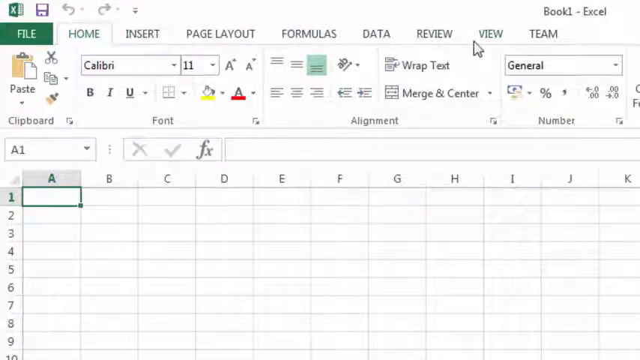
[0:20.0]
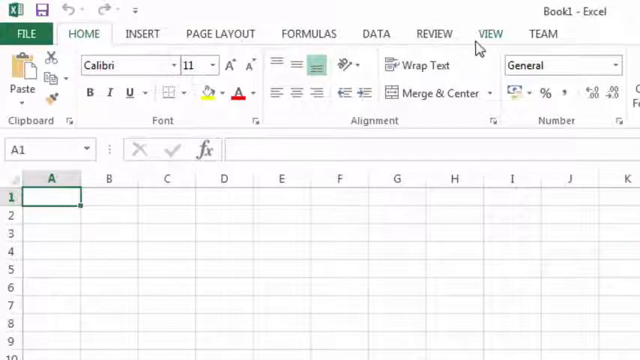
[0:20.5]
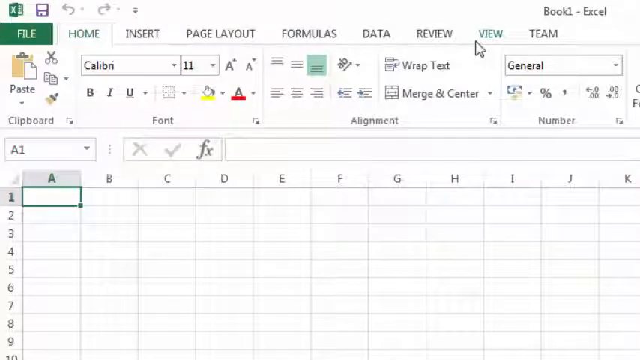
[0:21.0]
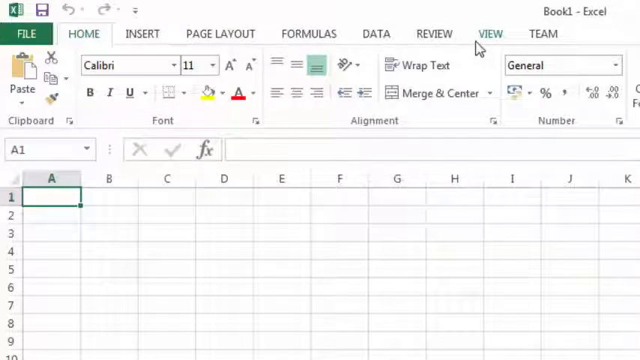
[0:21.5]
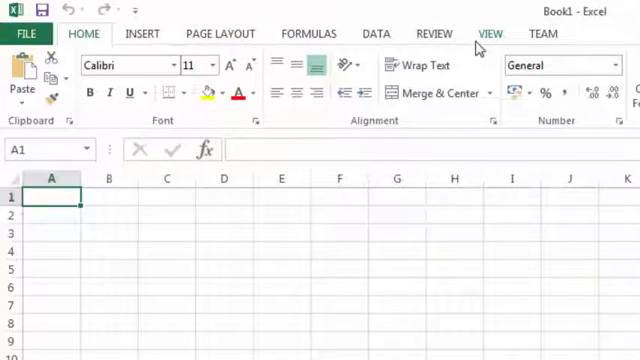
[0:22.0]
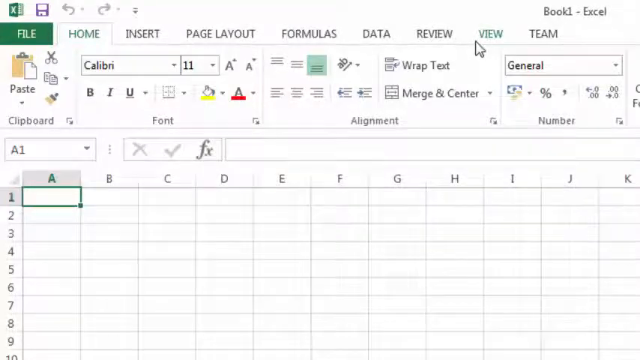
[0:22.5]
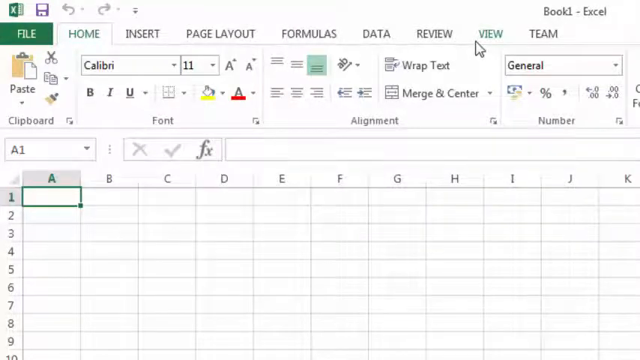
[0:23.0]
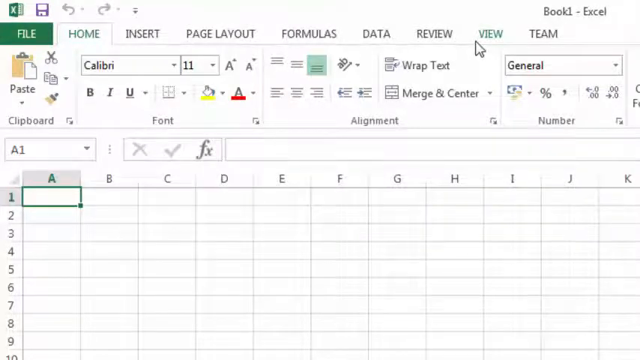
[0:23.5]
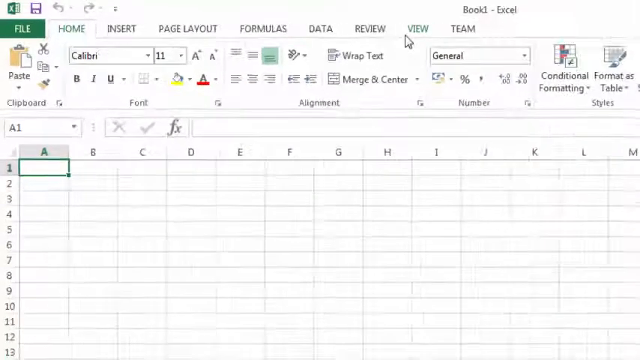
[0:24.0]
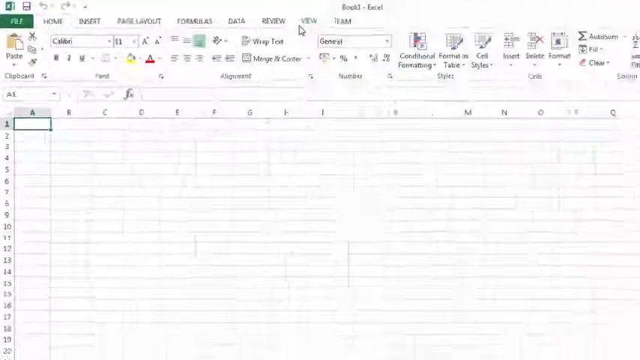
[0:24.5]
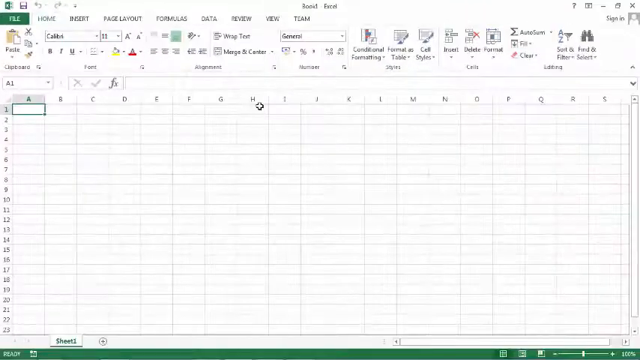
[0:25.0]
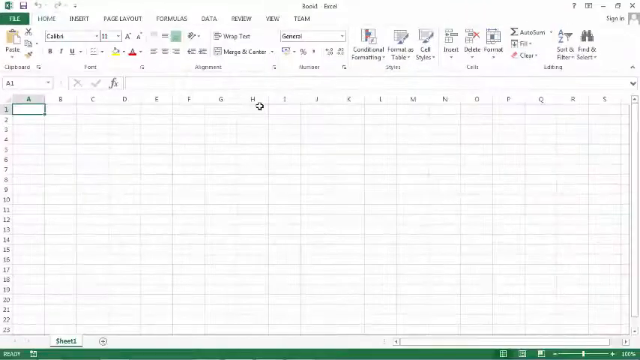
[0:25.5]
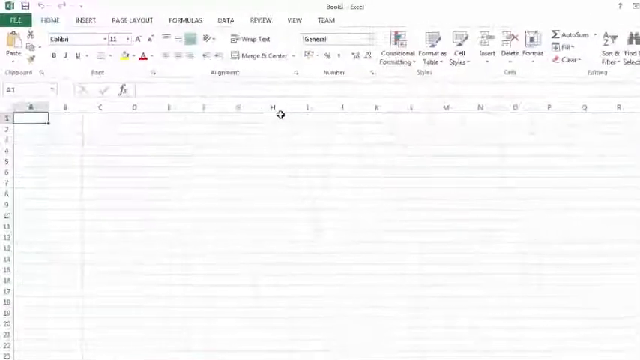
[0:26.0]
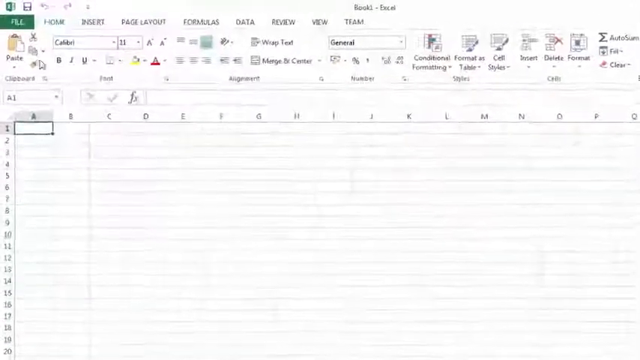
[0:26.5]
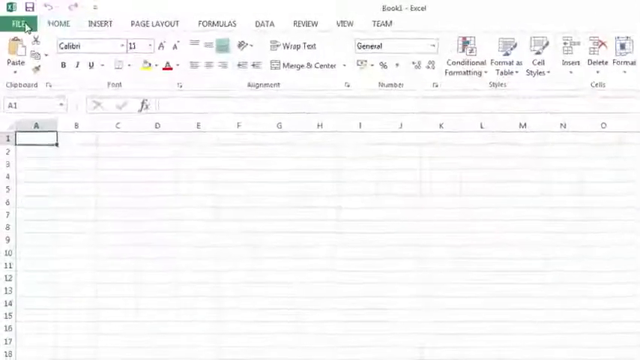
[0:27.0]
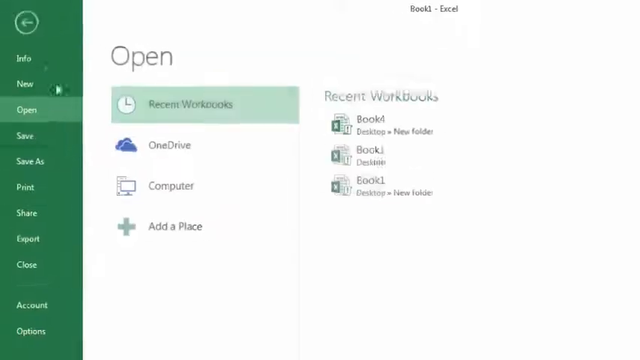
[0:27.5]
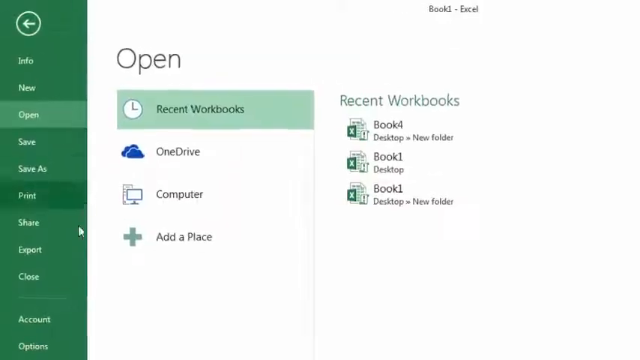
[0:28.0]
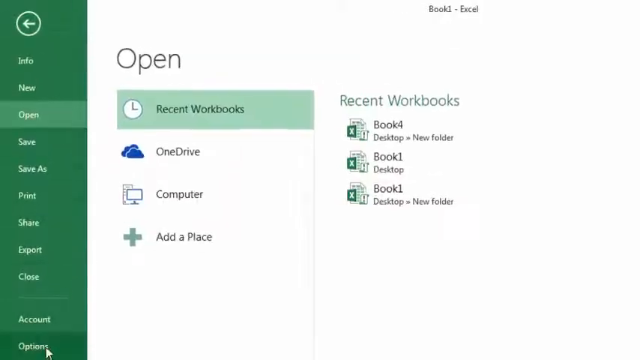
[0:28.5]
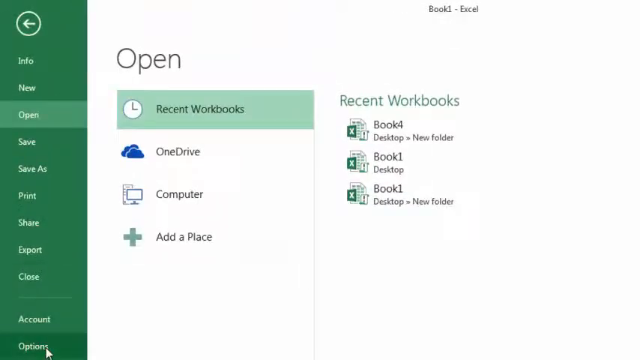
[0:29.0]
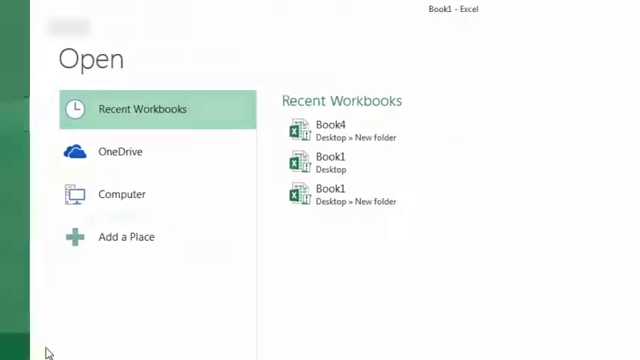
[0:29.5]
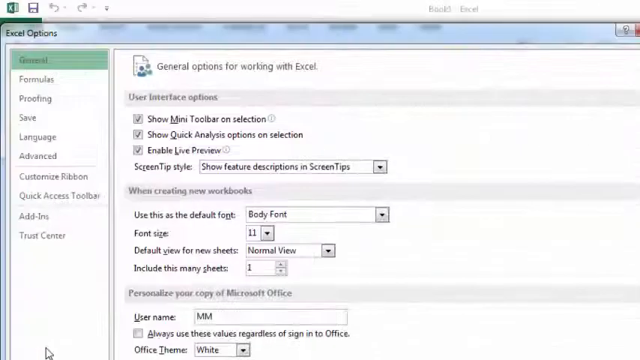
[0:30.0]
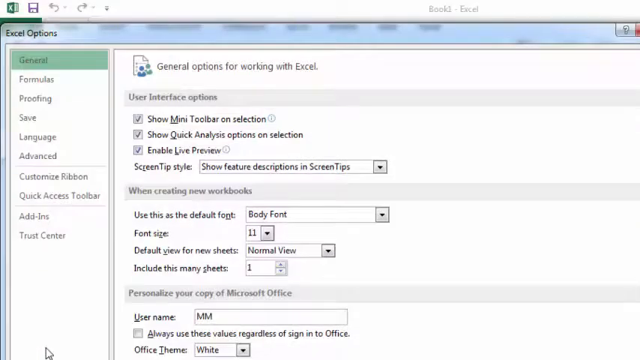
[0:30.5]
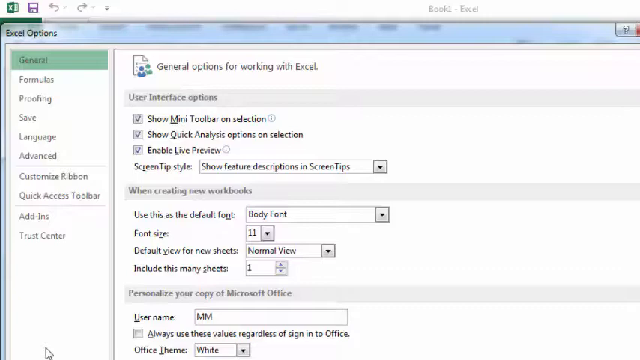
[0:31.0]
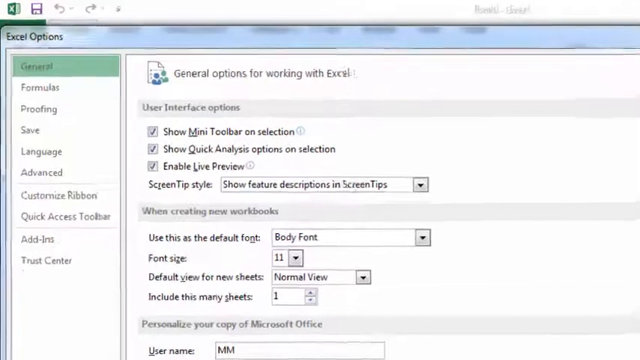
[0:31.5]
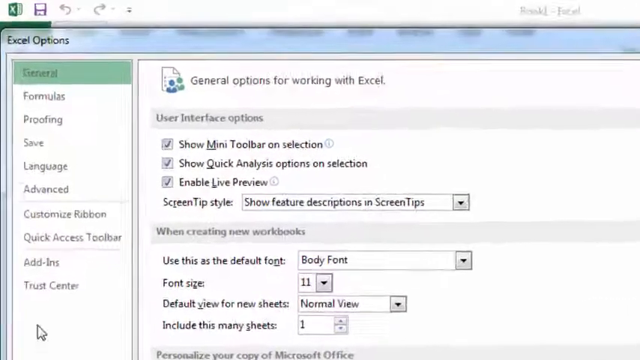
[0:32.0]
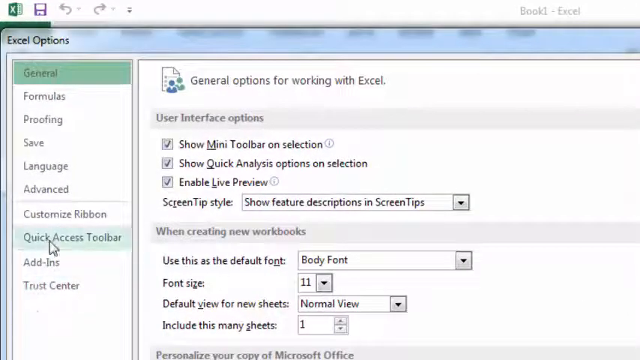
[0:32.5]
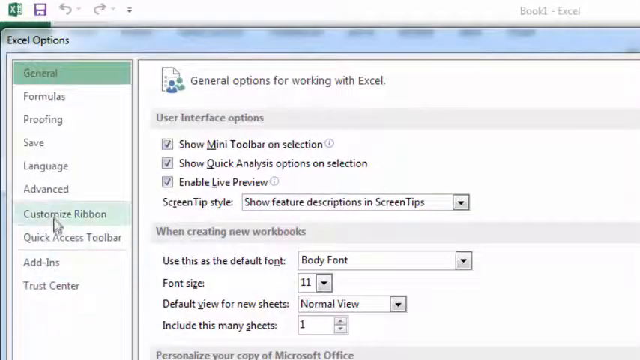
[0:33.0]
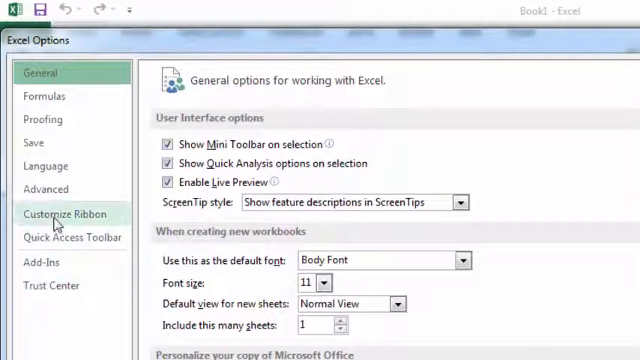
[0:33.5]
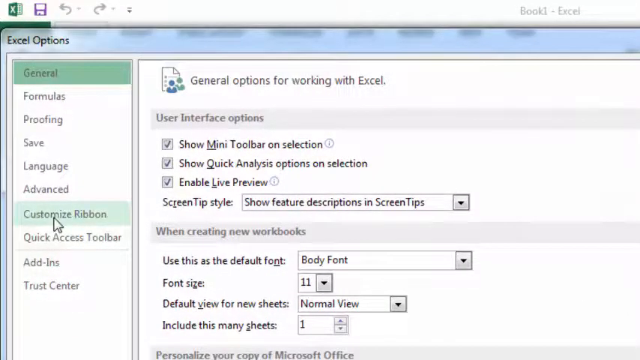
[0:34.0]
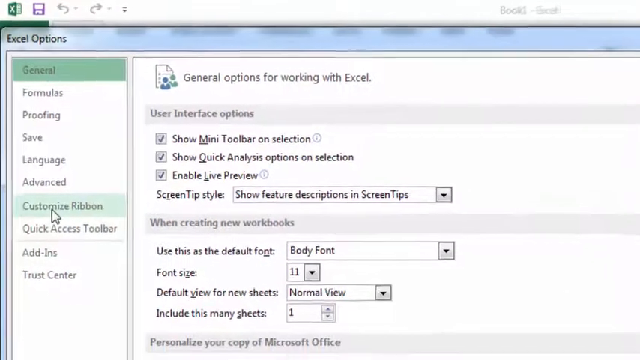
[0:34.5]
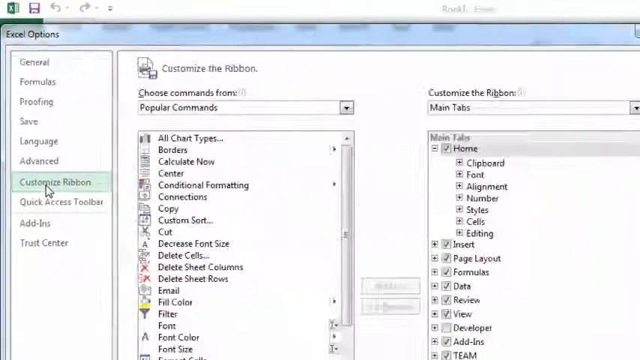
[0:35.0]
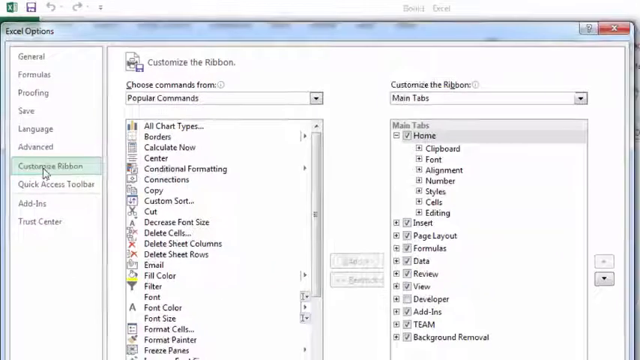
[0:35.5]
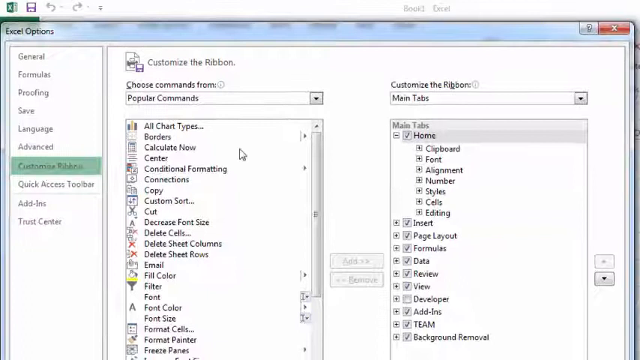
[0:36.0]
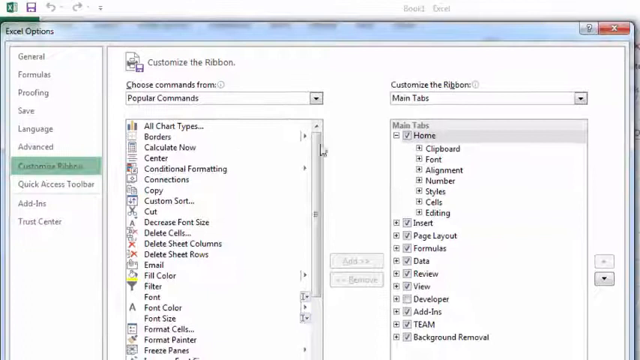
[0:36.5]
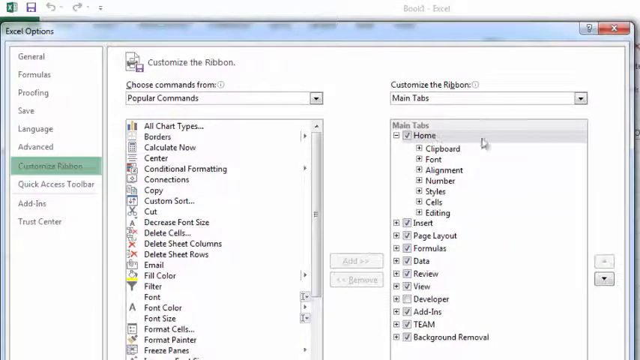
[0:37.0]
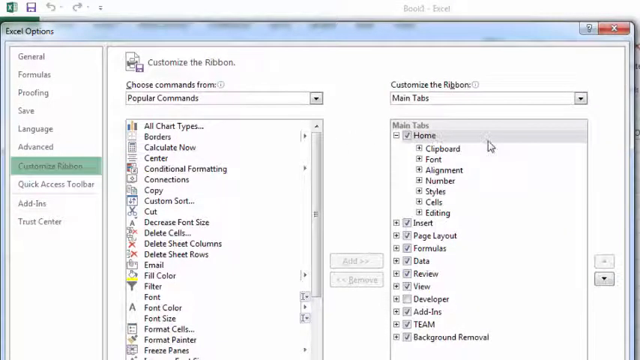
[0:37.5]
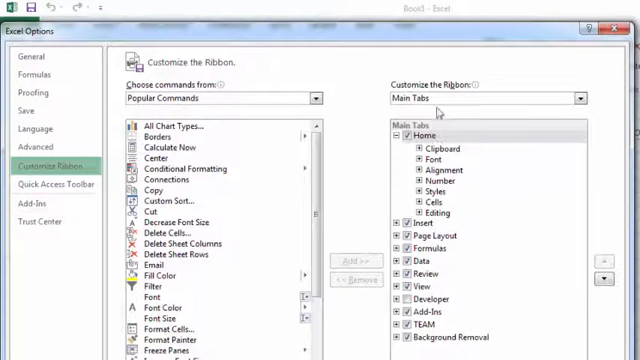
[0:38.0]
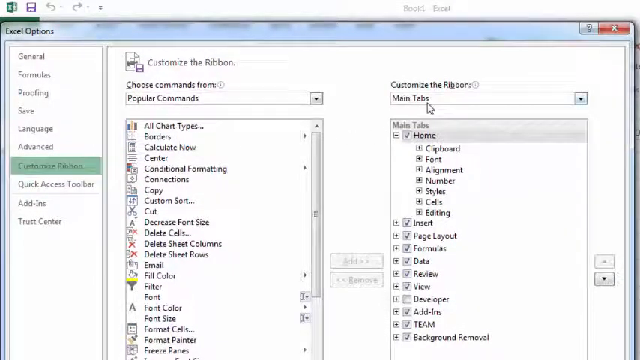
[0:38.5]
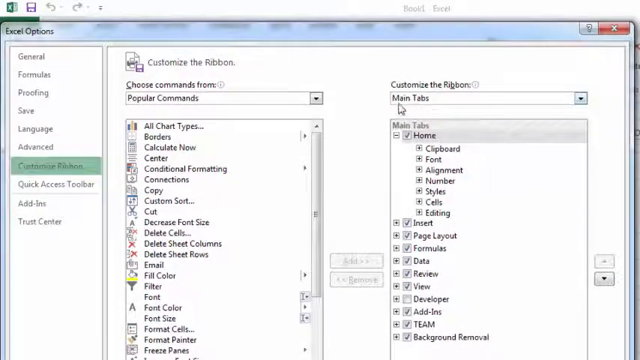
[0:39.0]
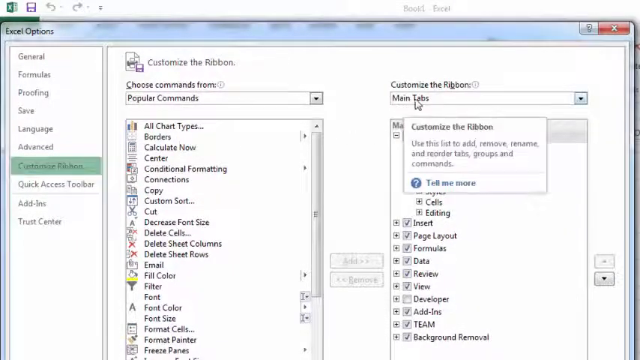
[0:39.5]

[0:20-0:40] Column A is seen and then unseen. The page is taken to the front view, where recent workbooks can be opened, and from there it goes to Excel Options. Excel Options lists General, Formulas, Proofing, Save, Language, Advanced, Customize Ribbon, Quick Access Toolbar, Add-ins and Trust Center. The General options for working with Excel show user interface options with tick boxes, including showing the Mini Toolbar on selection and showing Quick Analysis options on selection. Customize Ribbon is then opened, showing the popular commands and the main tabs. Then the view zooms in on column A.